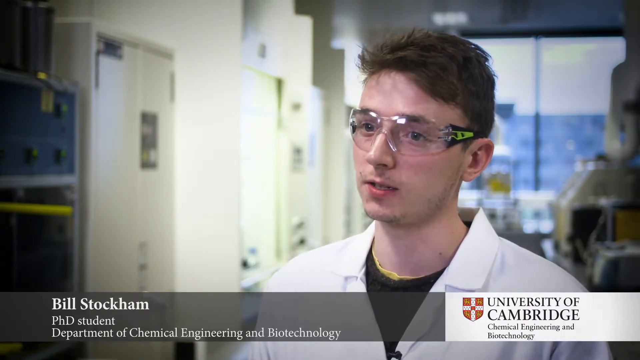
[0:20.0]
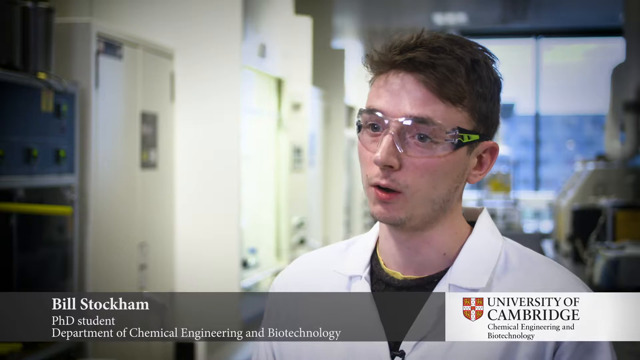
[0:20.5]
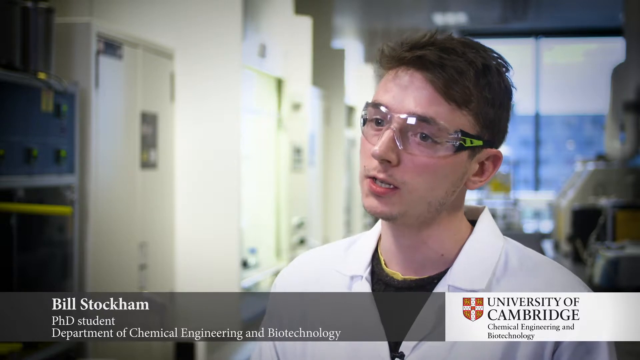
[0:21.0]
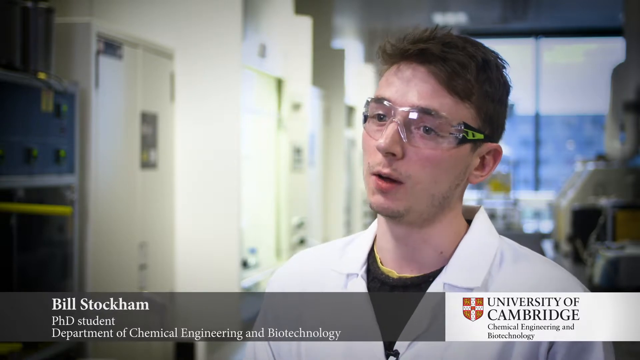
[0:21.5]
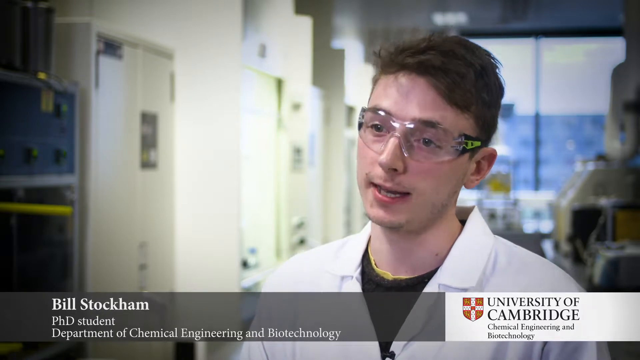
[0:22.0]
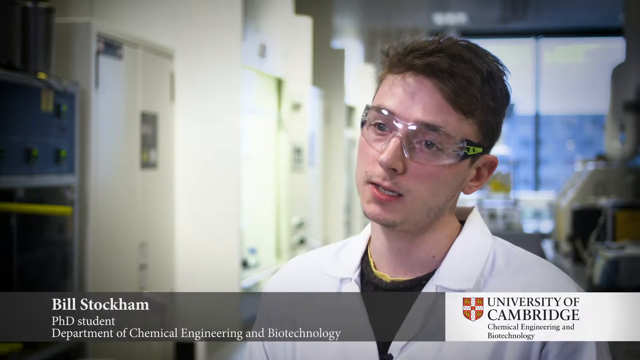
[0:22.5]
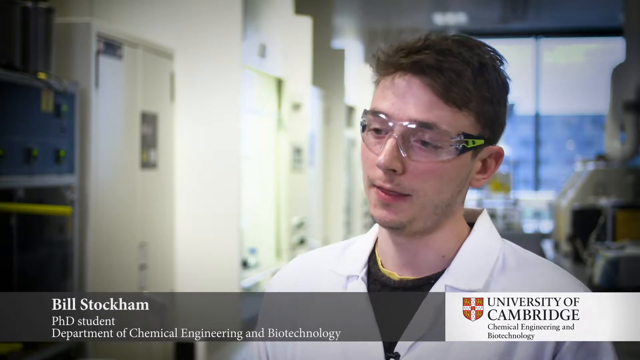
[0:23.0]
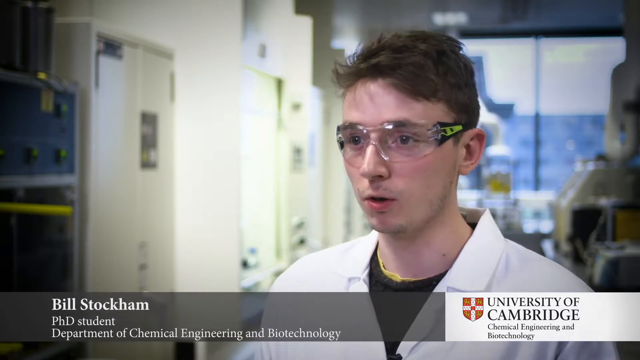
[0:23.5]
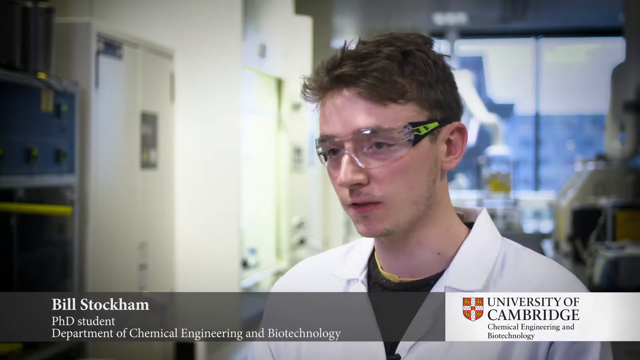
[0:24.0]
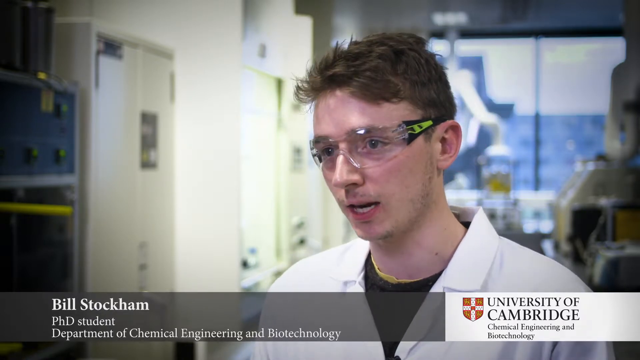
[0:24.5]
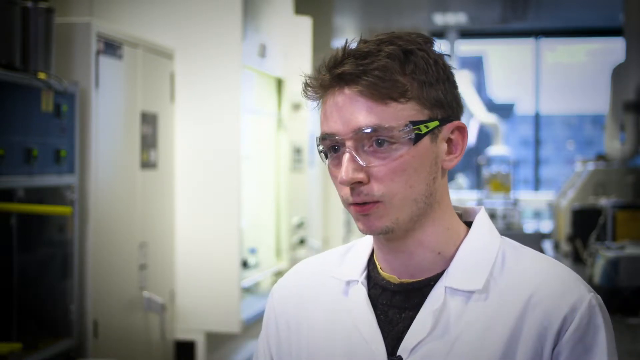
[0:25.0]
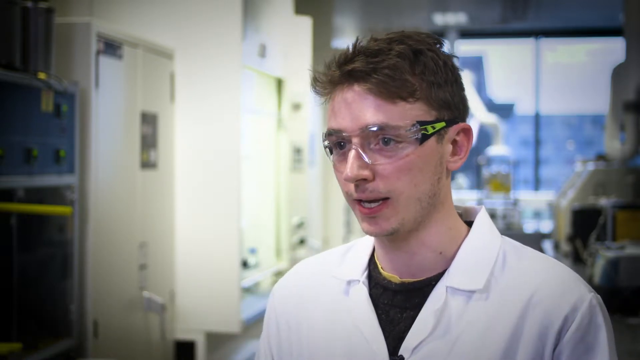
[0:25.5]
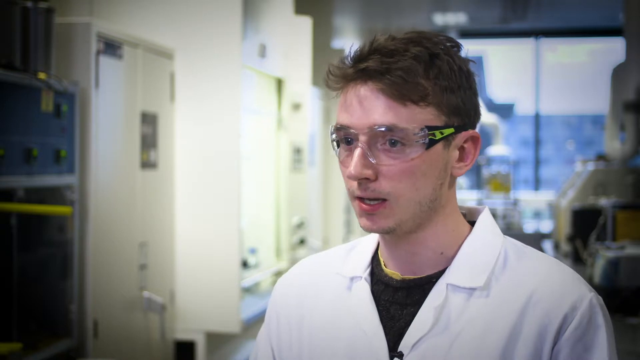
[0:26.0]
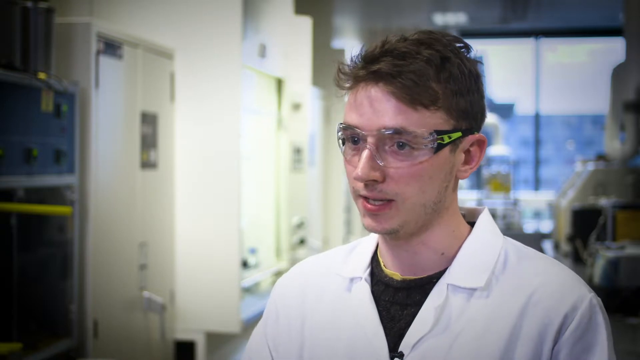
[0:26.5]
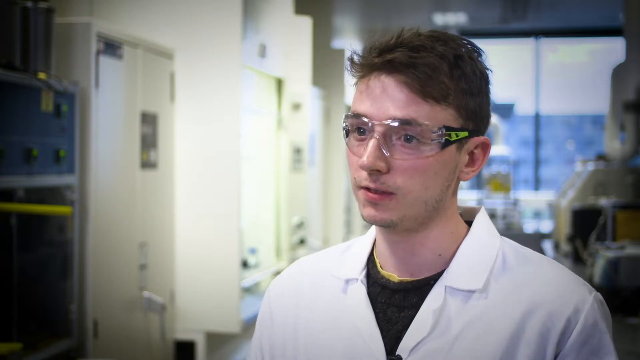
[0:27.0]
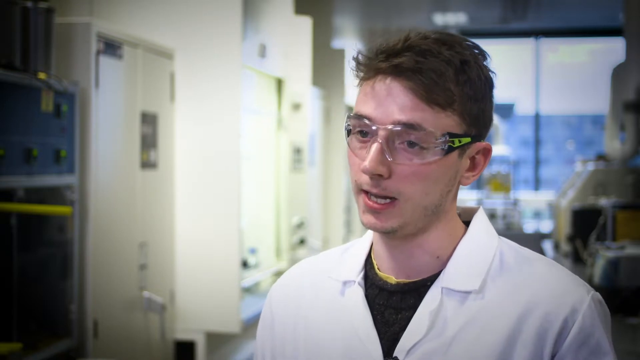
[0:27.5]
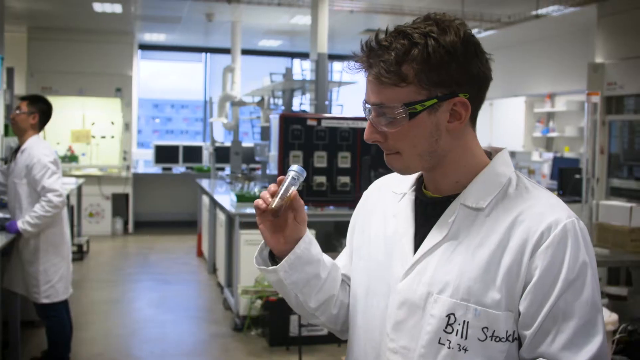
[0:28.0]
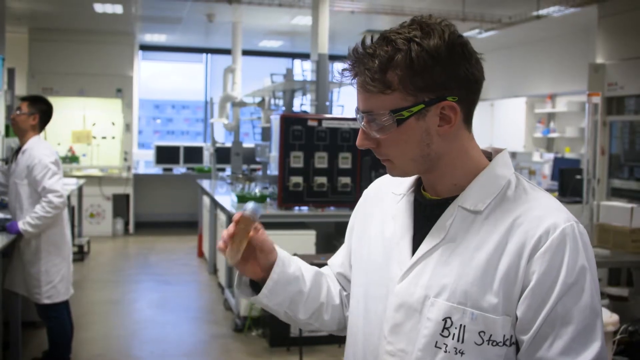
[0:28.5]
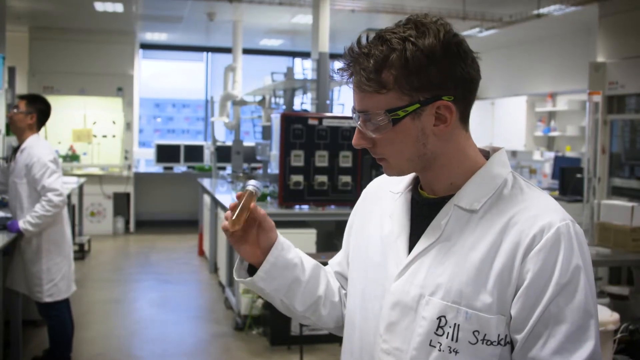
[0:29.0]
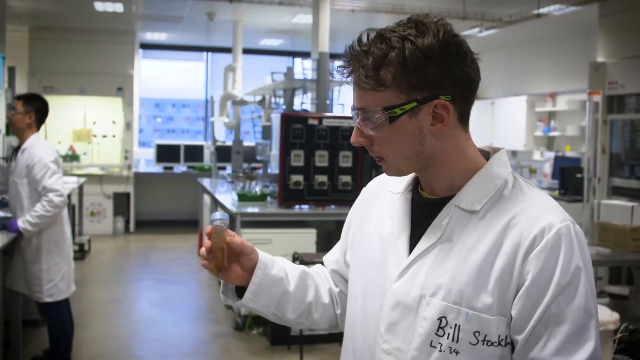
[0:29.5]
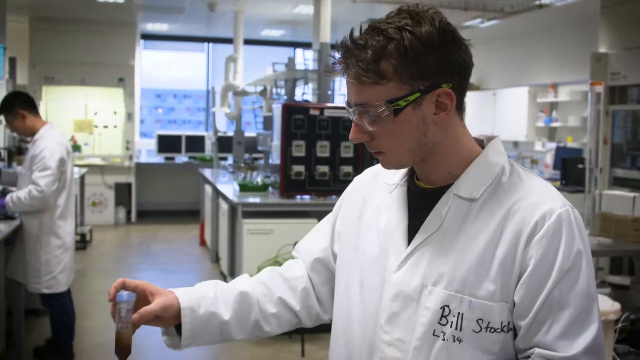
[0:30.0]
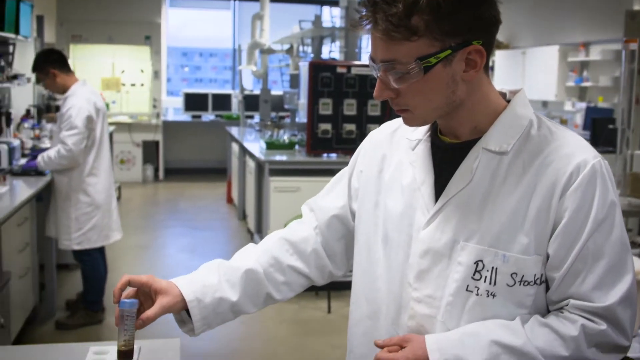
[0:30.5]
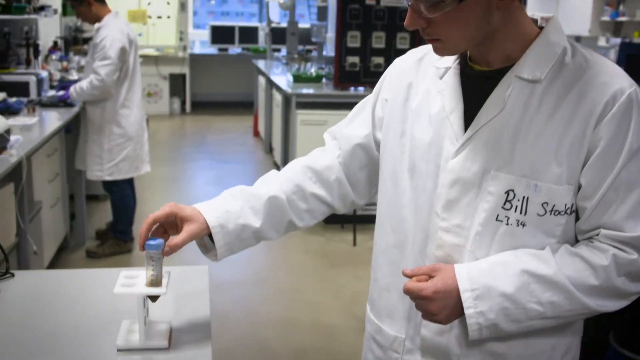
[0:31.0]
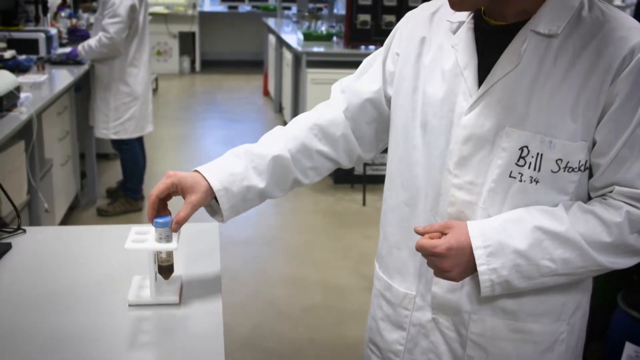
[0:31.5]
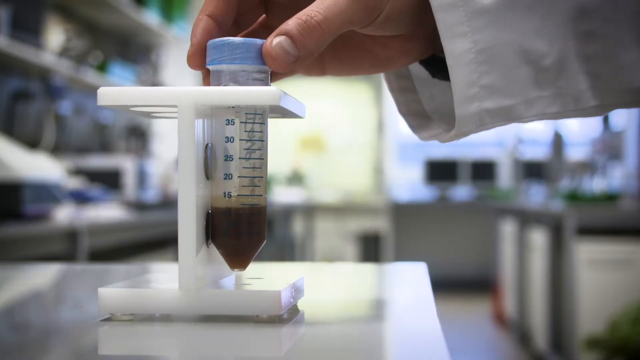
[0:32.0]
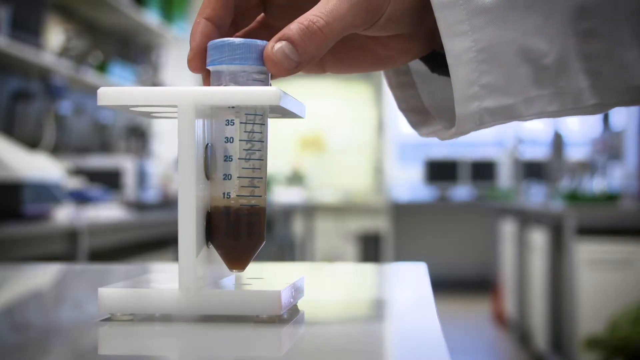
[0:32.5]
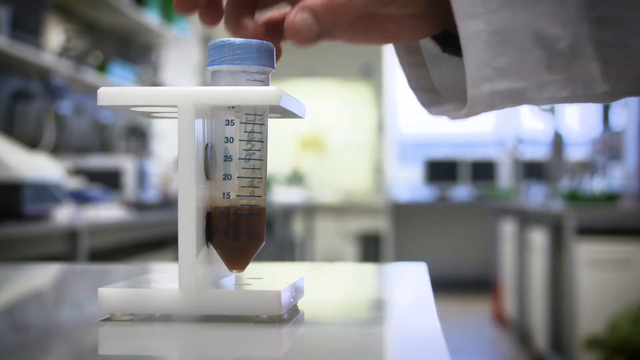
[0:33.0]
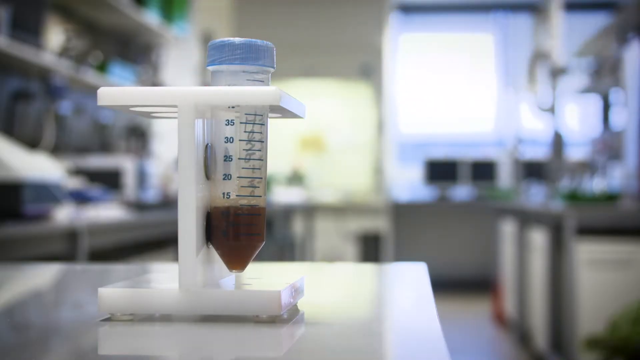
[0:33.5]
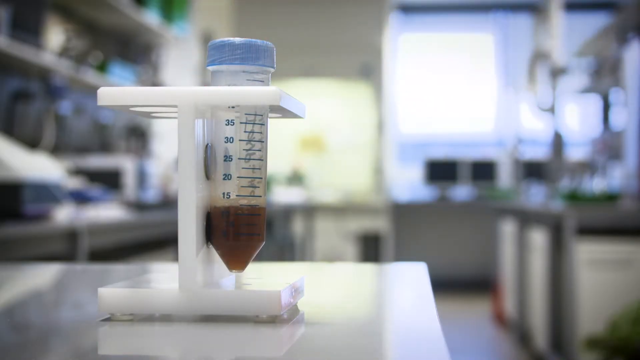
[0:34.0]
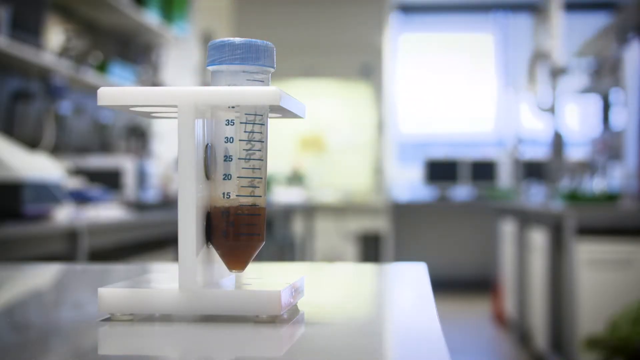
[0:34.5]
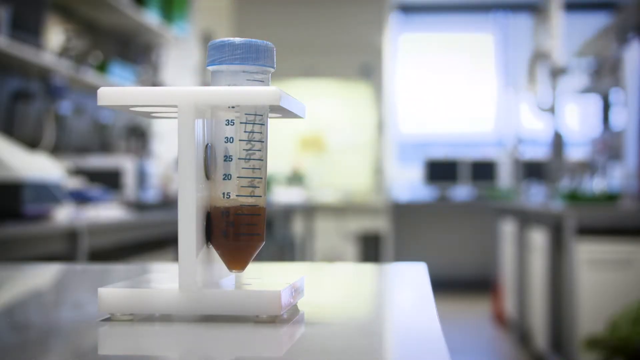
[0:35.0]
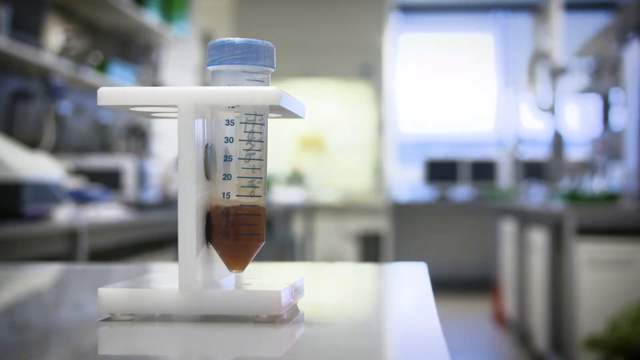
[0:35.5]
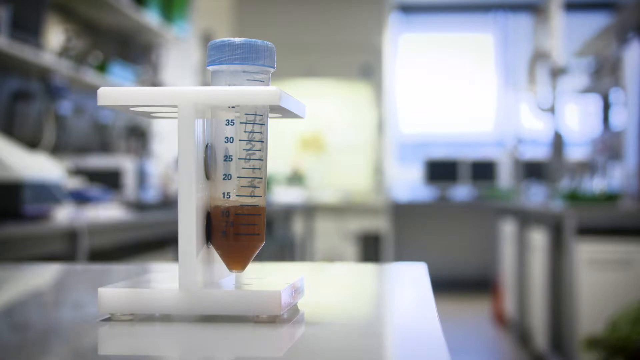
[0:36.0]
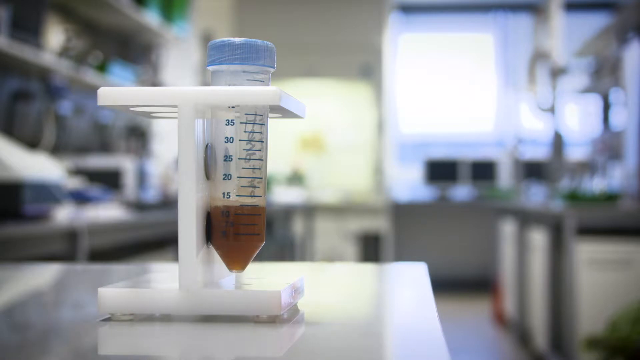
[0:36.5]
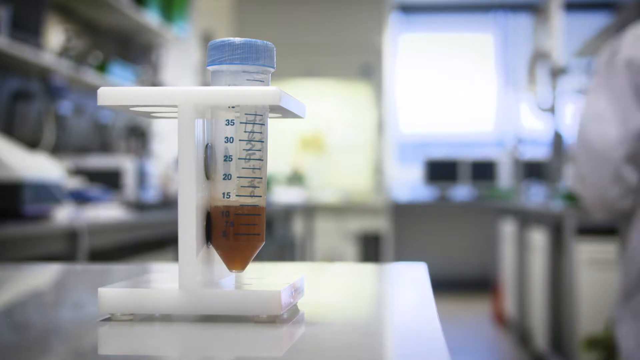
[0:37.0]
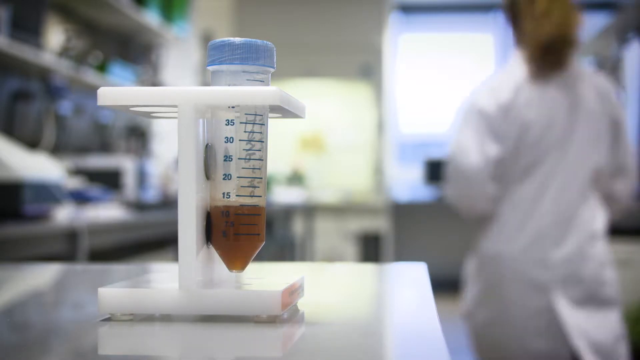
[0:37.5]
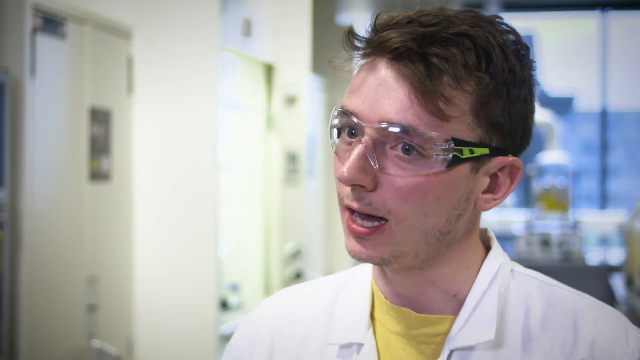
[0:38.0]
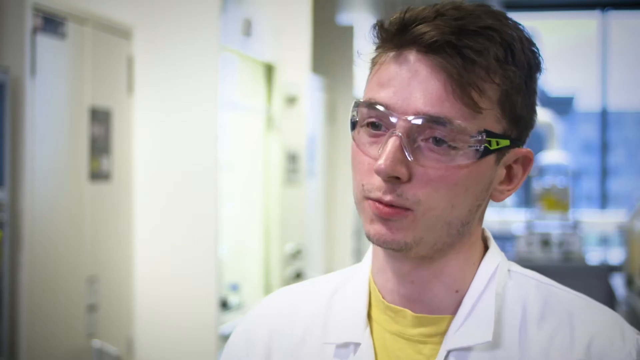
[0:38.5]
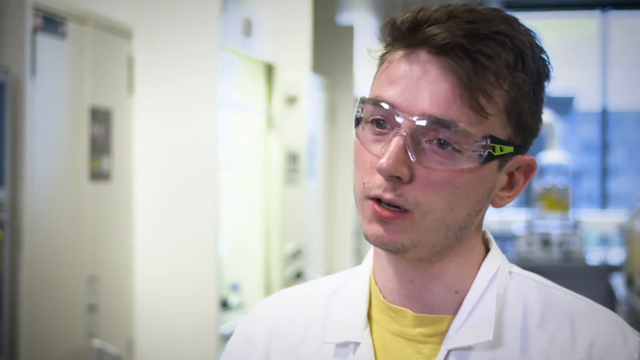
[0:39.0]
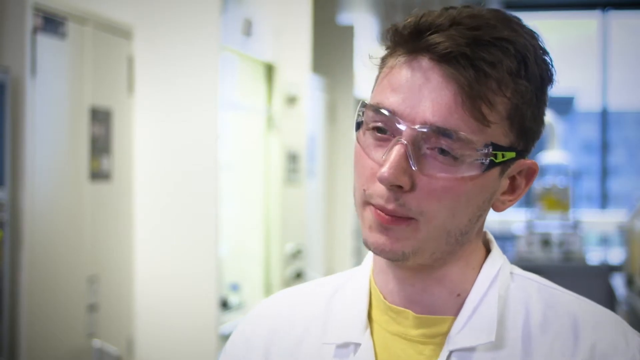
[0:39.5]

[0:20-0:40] Bill Stockham, a PhD student in chemical engineering, is interviewed wearing safety glasses. He then gets up and stands at a table, holding brown liquid in what looks like a measuring cylinder that comes to a point at the end and has a blue top. He shakes it and puts it down in a holder, then explains to somebody what he is doing. A girl in a lab coat, with brown hair in a ponytail, walks behind him as he speaks. The lab looks very clean and sterile; another man works at a nearby counter, and there are two windows on the other side. Everyone wears a white lab coat. Bill wears a long-sleeve black t-shirt under his lab coat, and his name, "Bill Stockham", is on the lab coat, apparently written in magic marker.